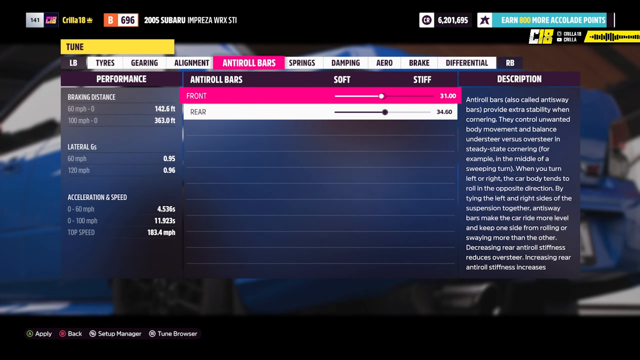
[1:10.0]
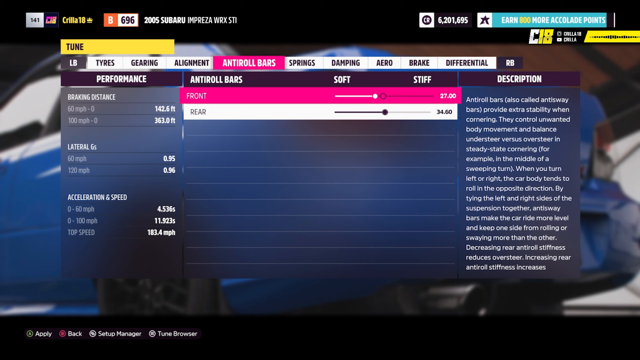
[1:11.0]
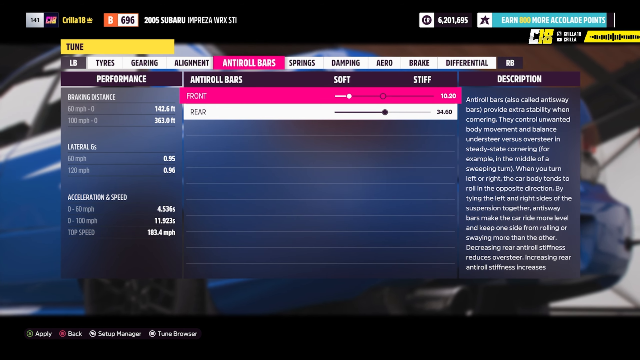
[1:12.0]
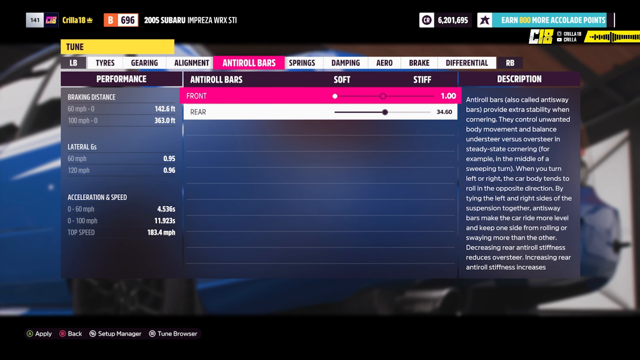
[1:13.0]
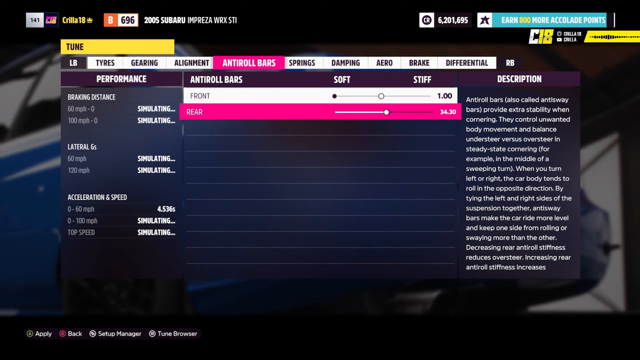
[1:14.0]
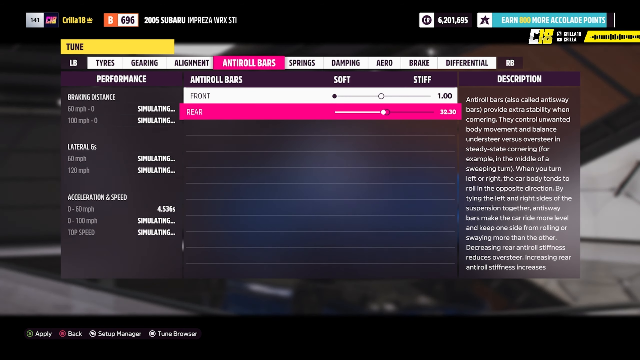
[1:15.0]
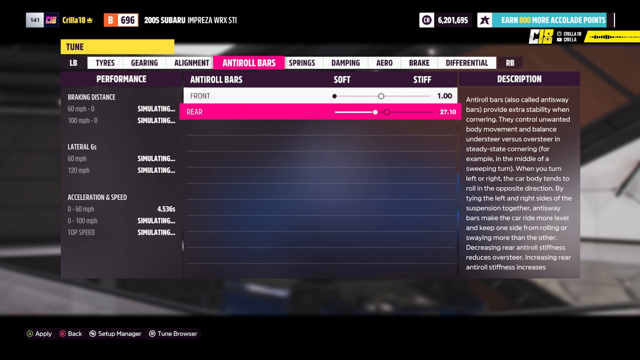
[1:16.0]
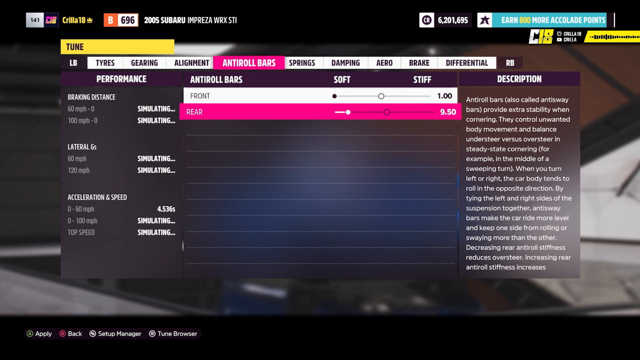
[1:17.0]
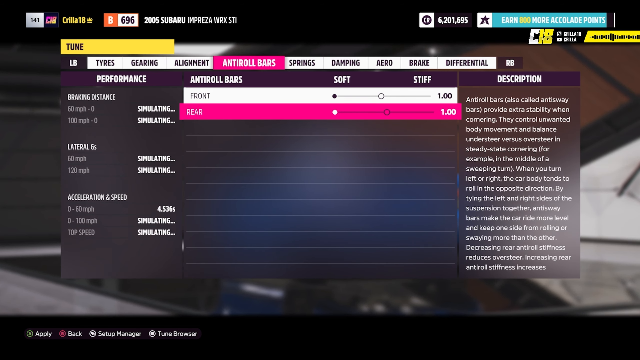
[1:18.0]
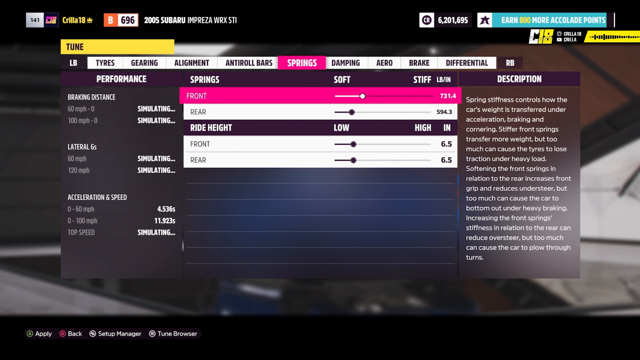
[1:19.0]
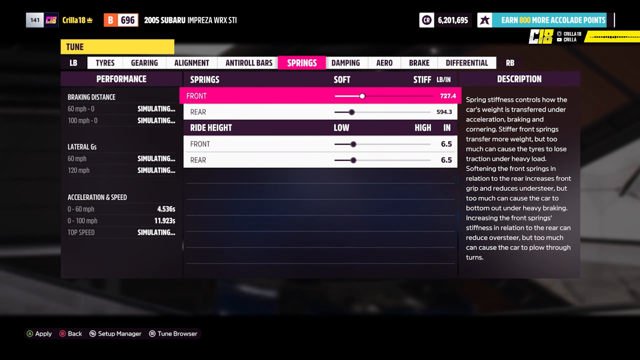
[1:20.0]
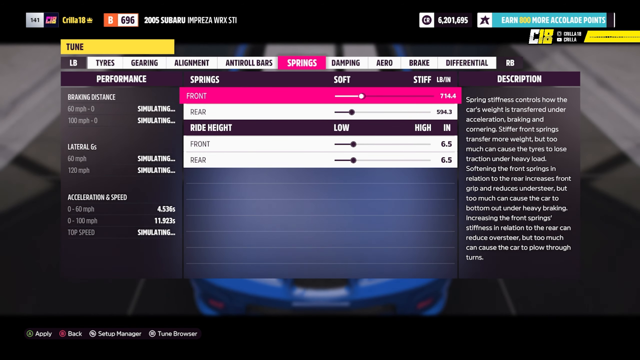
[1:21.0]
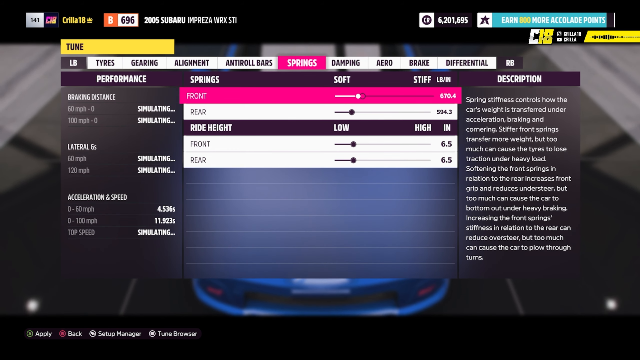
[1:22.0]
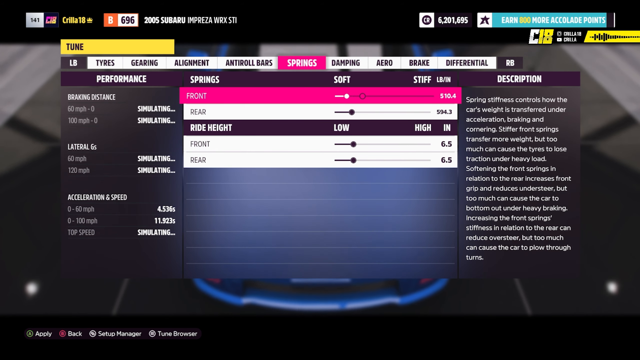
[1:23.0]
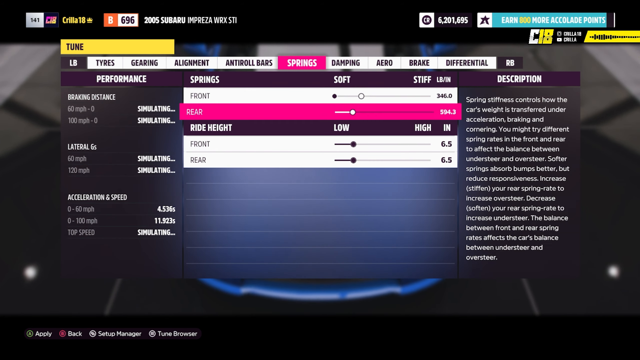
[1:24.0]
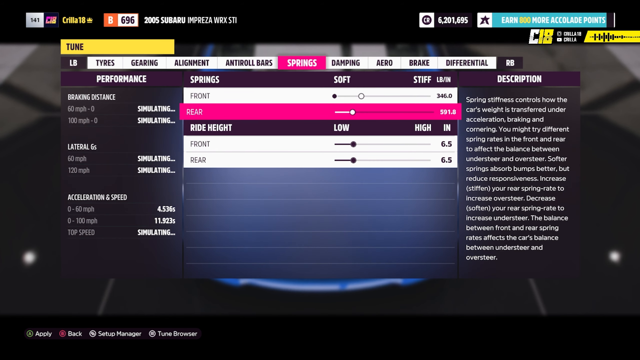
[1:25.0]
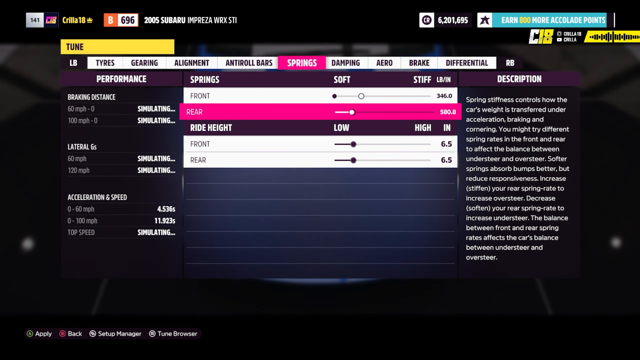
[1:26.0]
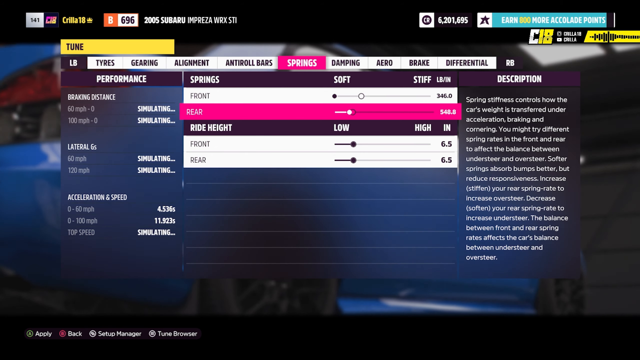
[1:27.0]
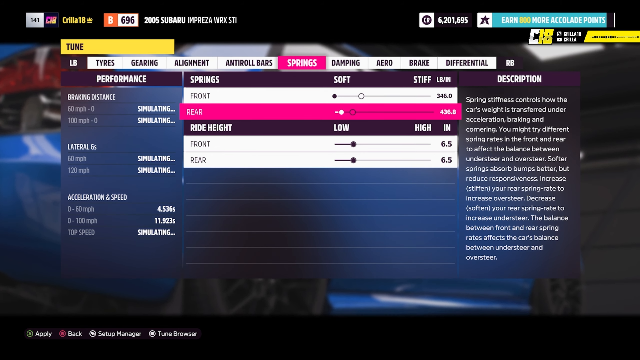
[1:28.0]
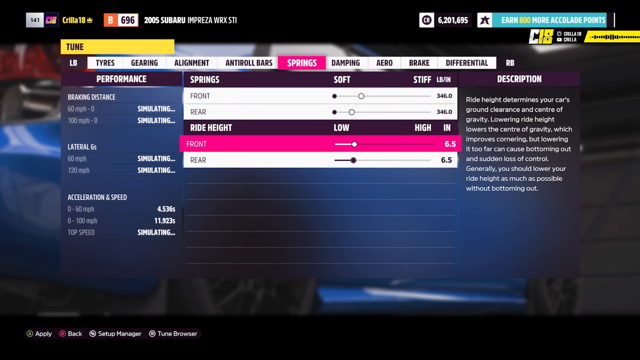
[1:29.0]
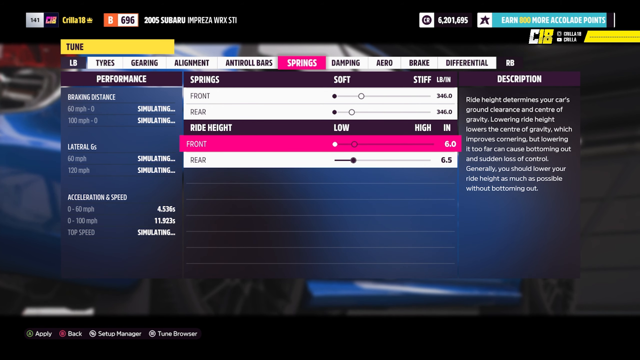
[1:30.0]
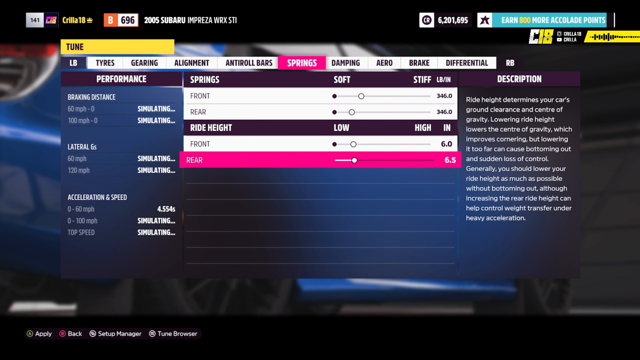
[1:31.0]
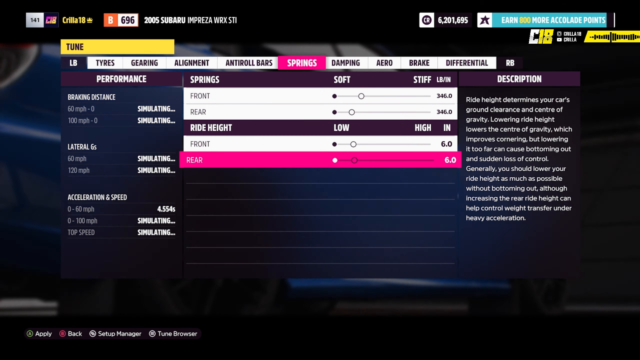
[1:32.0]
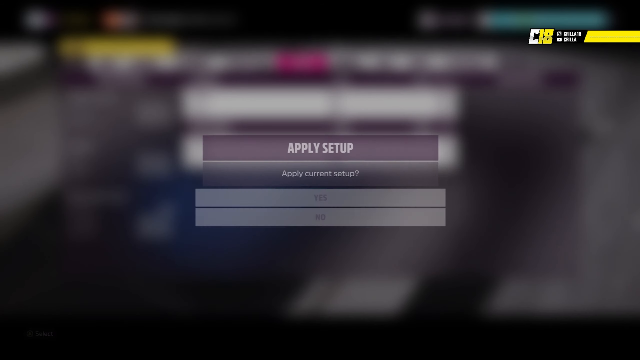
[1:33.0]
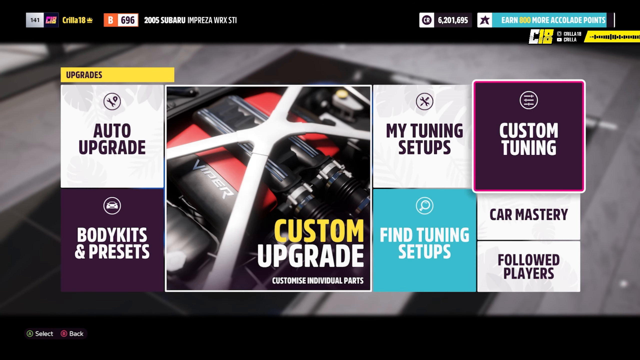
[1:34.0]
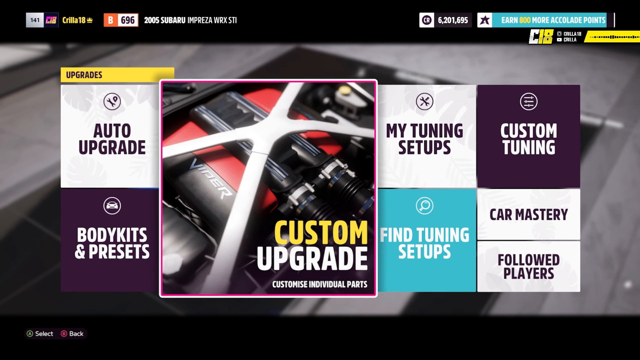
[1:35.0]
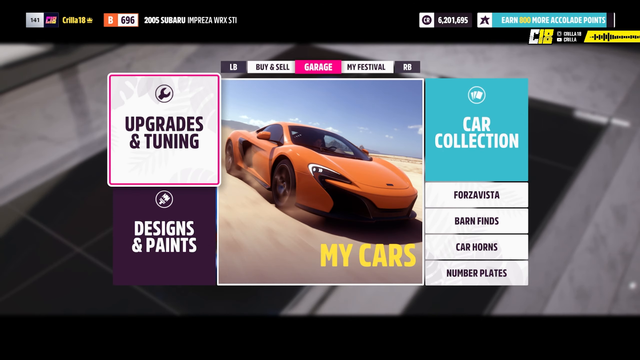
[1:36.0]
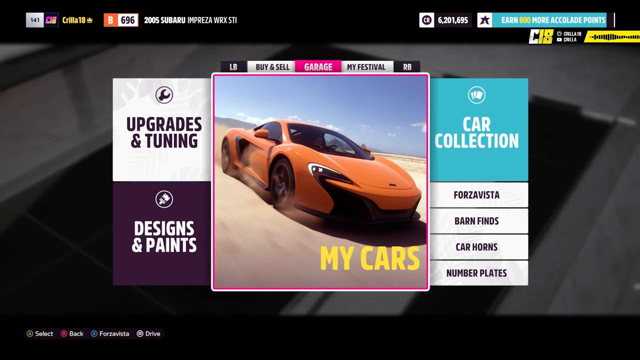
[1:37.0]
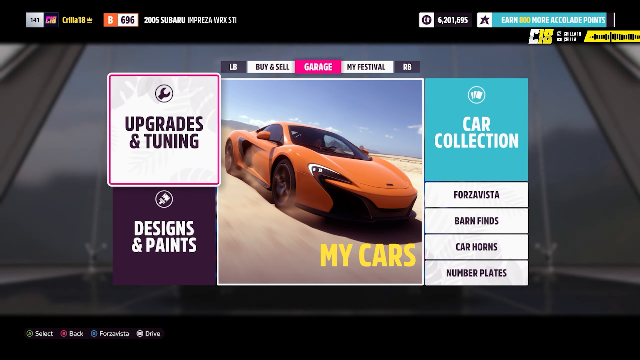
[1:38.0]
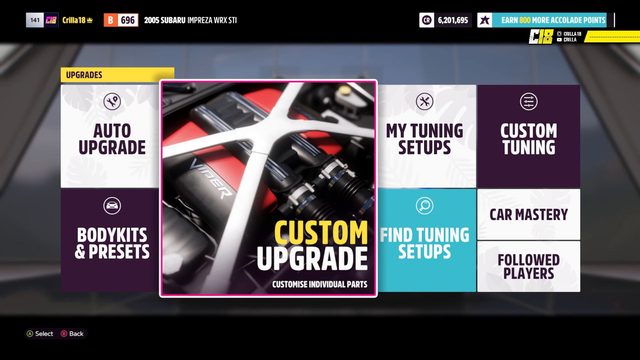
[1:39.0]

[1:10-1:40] The player reduces the front anti-roll bar all the way to the lowest, softest value, and does the same for the rear anti-roll bar. They then switch to the springs and set the front and rear springs to the lowest value possible, then set the front and rear ride height to the lowest possible. Seemingly content with the setup, they exit the menu and apply it, switch to custom upgrades, and briefly back out of the menu.